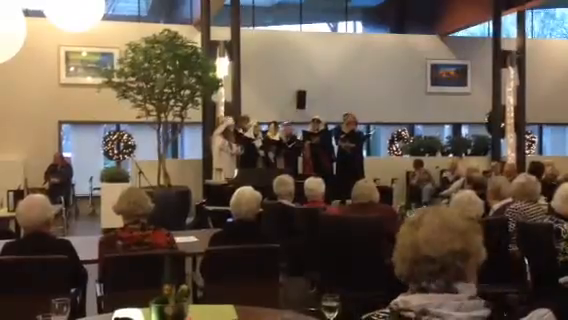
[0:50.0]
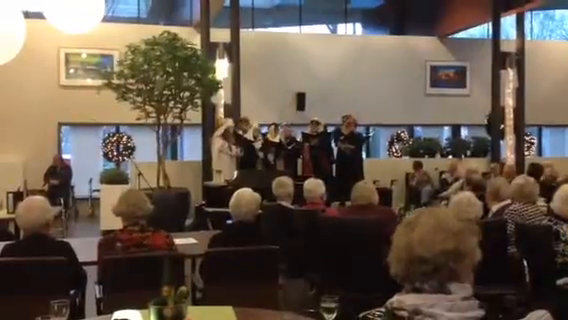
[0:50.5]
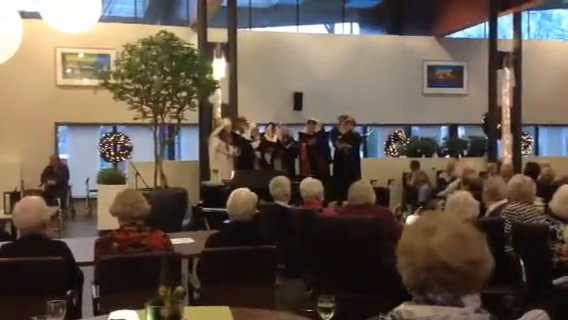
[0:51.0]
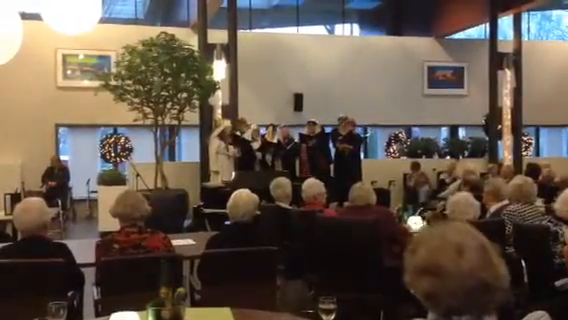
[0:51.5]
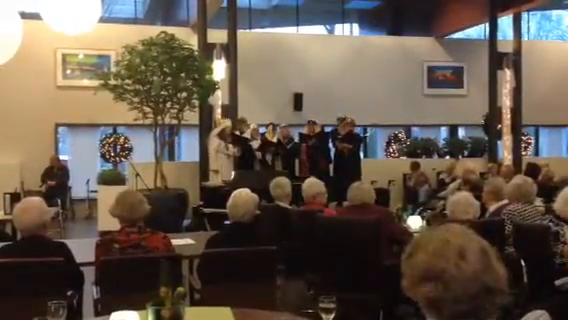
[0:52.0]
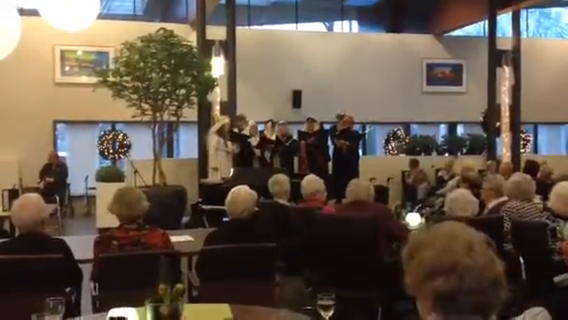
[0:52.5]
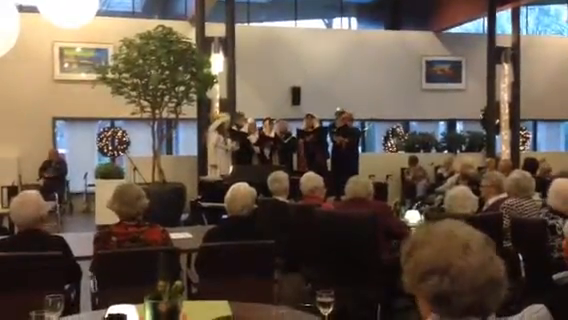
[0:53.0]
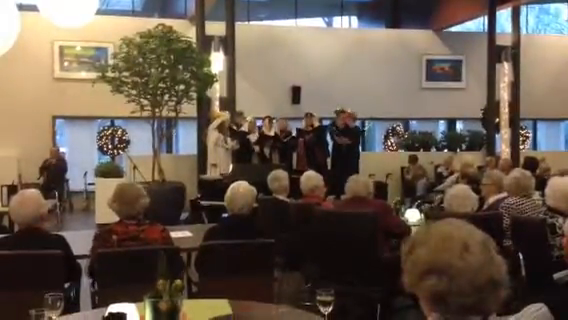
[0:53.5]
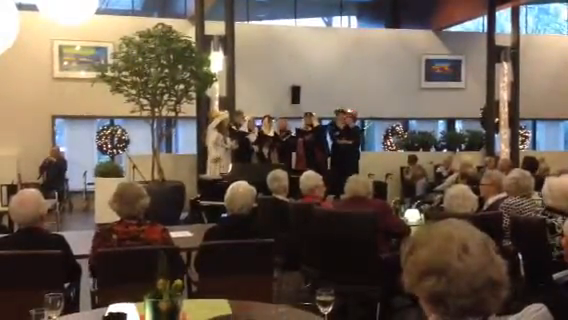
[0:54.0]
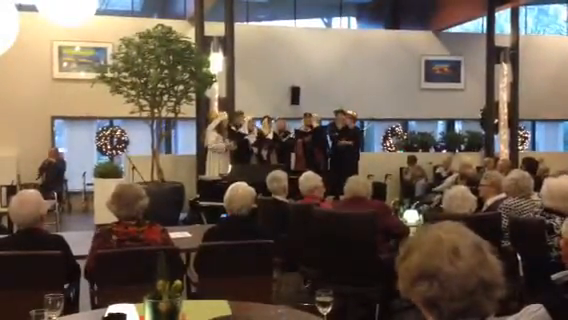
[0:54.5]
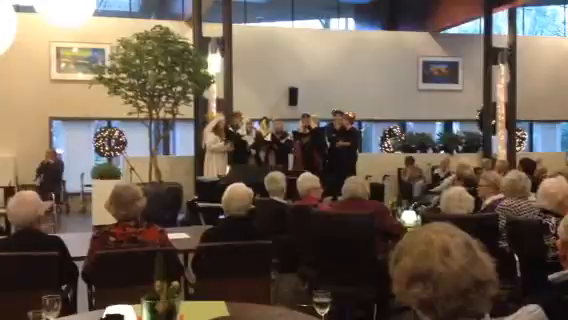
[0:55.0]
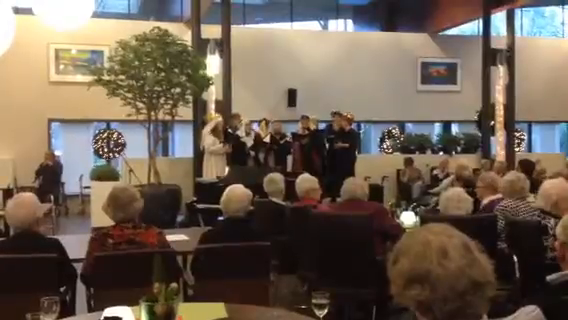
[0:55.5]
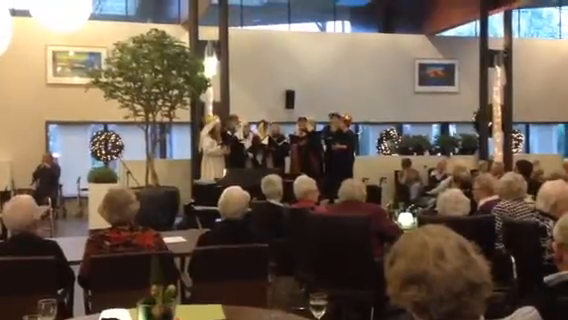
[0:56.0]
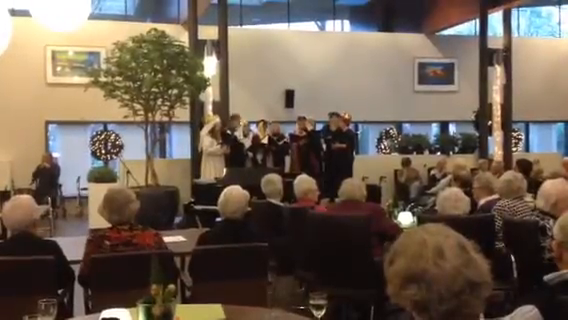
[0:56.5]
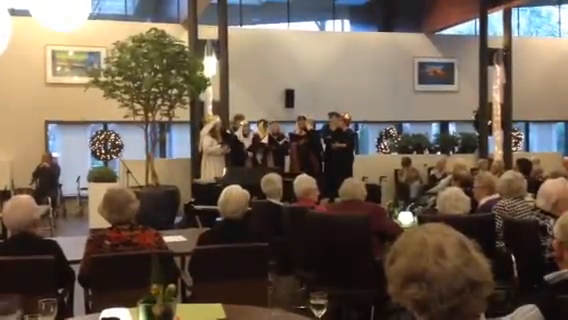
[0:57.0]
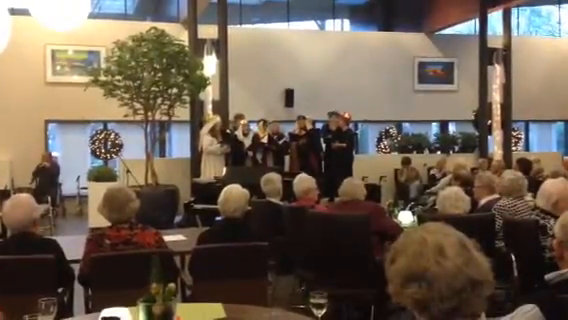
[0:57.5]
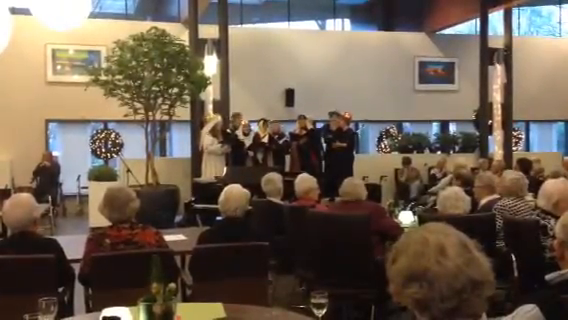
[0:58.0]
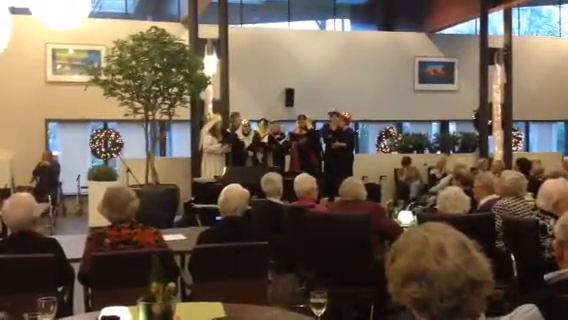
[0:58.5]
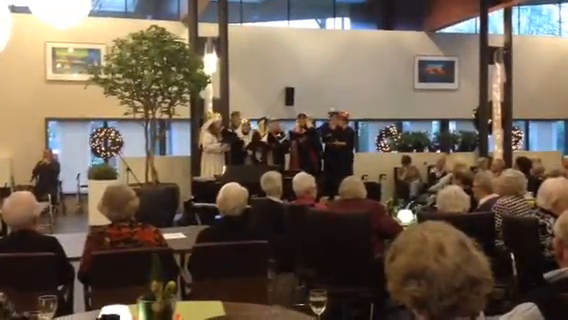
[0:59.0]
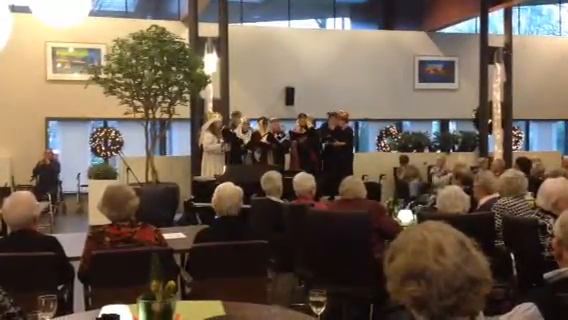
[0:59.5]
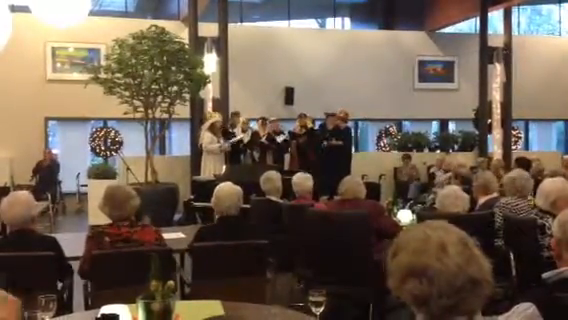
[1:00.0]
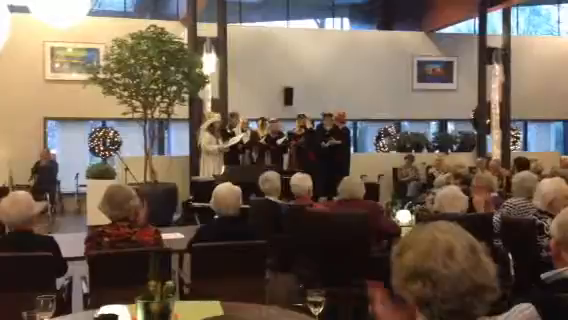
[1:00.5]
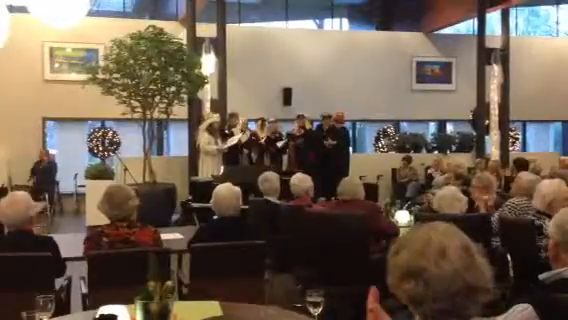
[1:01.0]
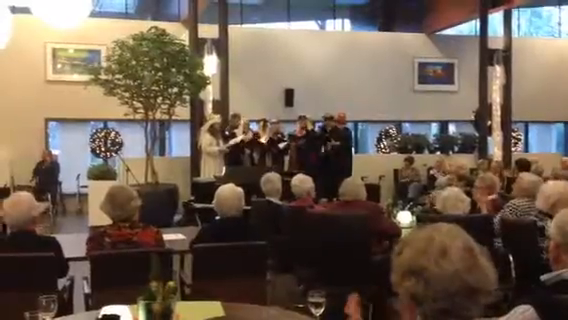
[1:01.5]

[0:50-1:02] The performers become more physically animated, moving a little, perhaps completing their performance. The man in the background to their right is looking away from the audience and the performance, perhaps observing a screen. The crowd keeps watching the performers very closely, and at one point they all begin clapping, perhaps a sign that the performance has finished. The crowd remains seated, calmly watching the performers up on stage, who have just finished.